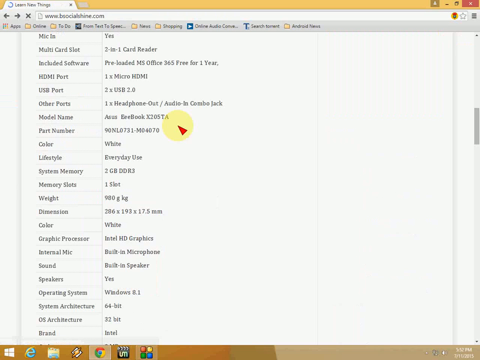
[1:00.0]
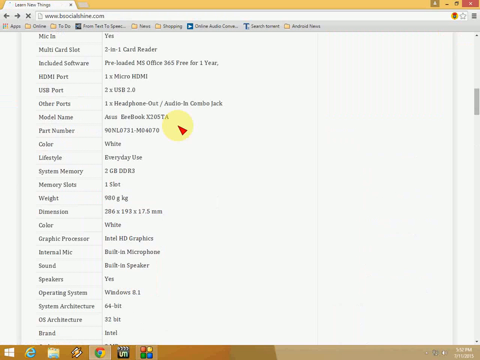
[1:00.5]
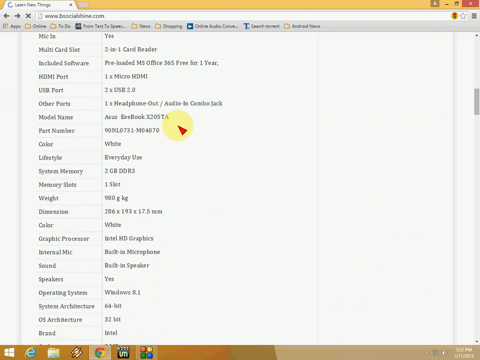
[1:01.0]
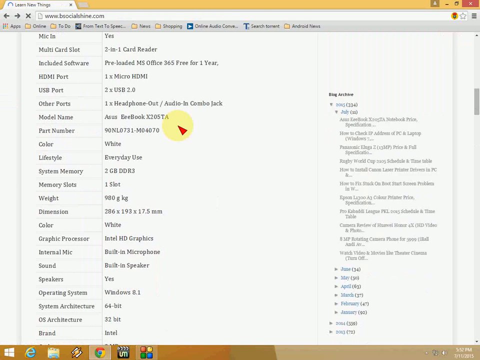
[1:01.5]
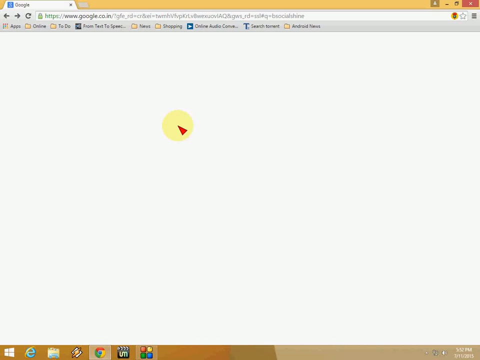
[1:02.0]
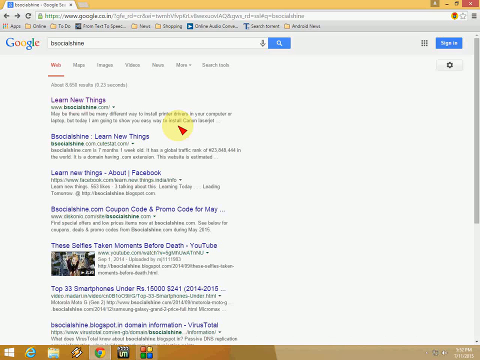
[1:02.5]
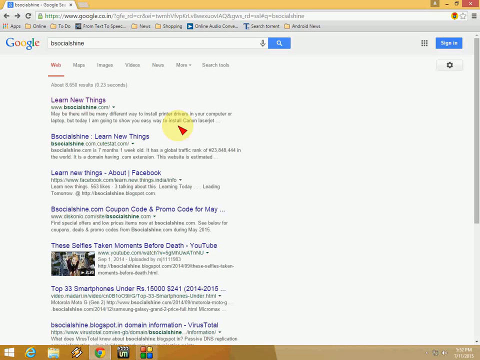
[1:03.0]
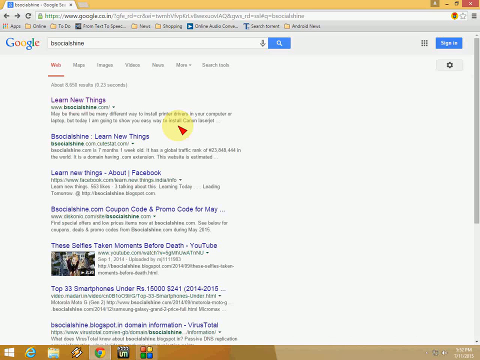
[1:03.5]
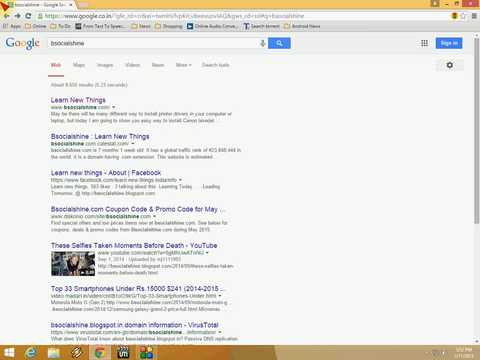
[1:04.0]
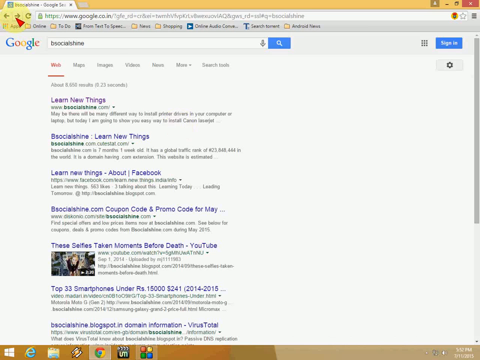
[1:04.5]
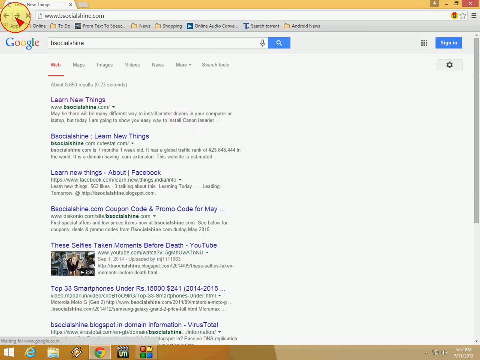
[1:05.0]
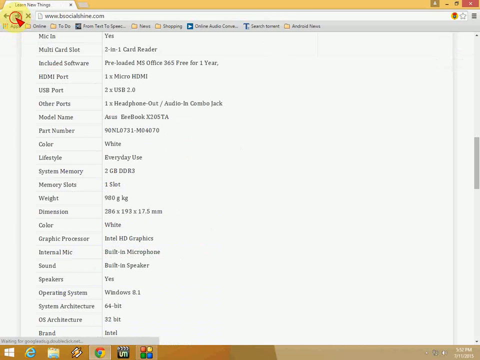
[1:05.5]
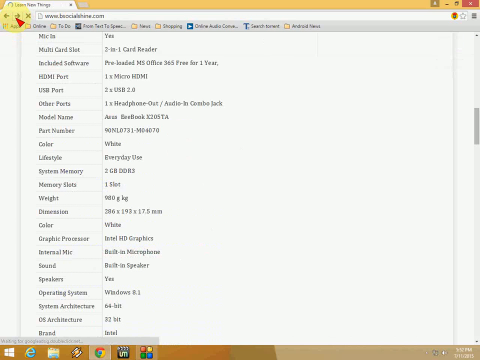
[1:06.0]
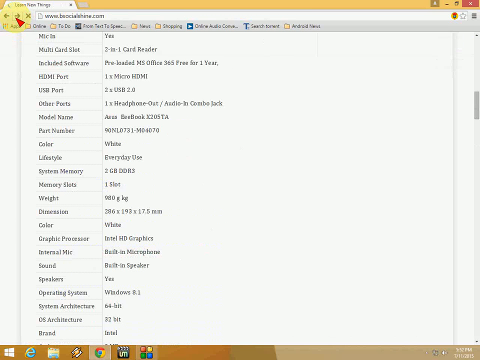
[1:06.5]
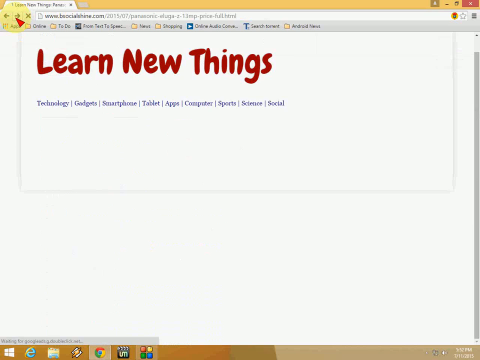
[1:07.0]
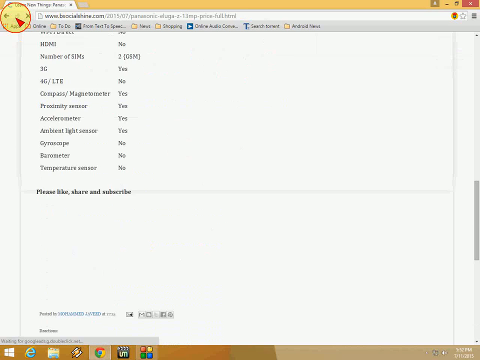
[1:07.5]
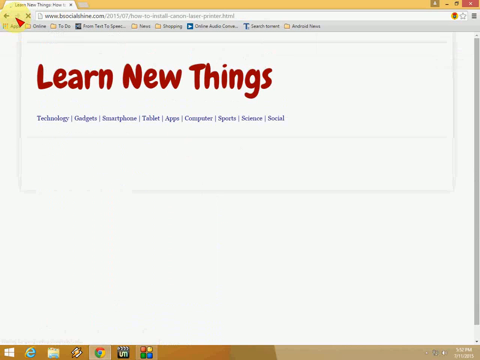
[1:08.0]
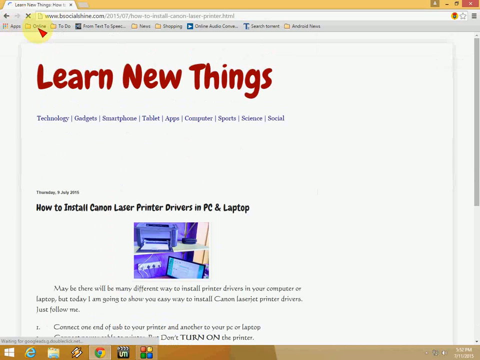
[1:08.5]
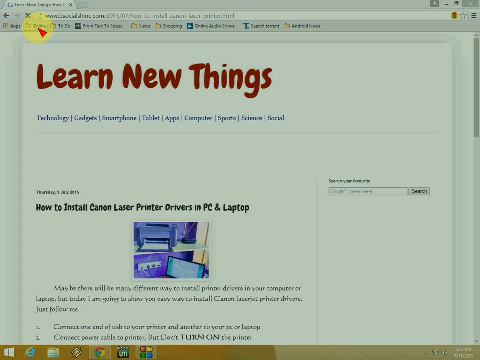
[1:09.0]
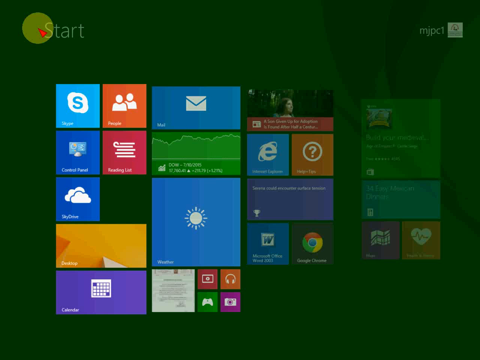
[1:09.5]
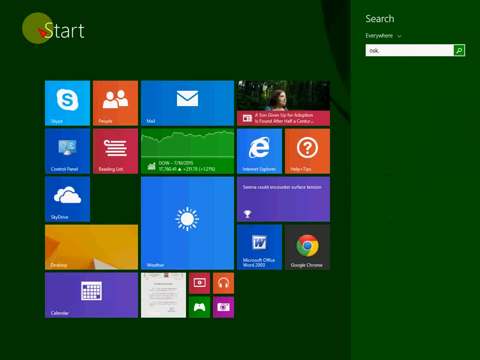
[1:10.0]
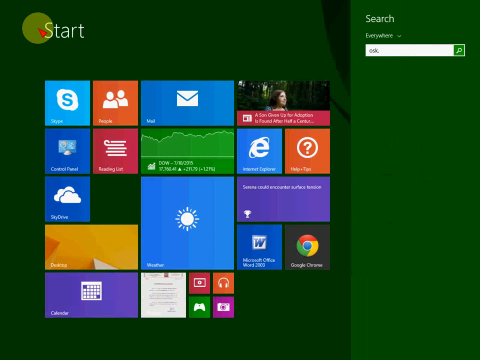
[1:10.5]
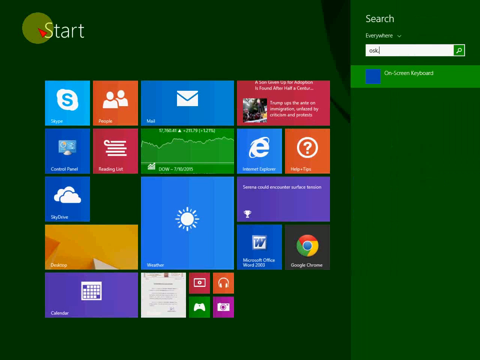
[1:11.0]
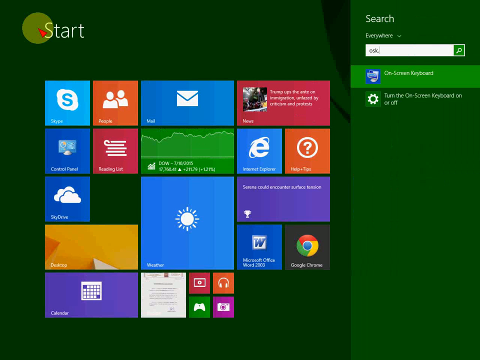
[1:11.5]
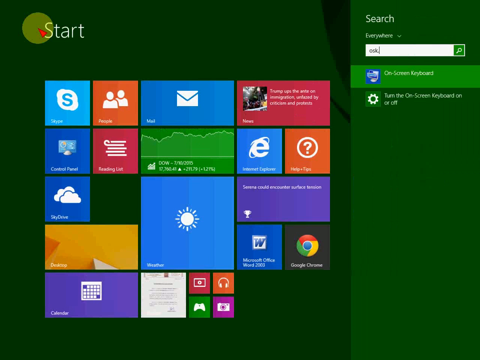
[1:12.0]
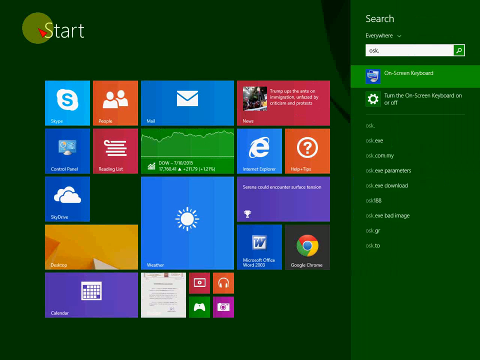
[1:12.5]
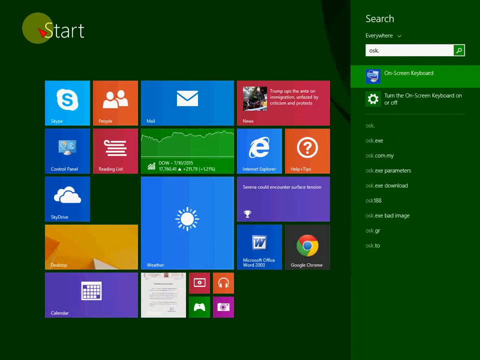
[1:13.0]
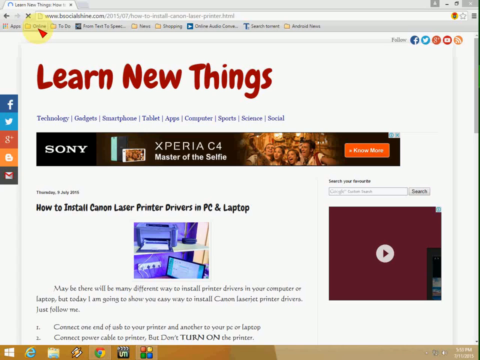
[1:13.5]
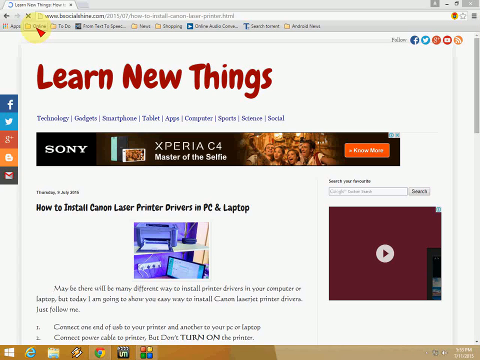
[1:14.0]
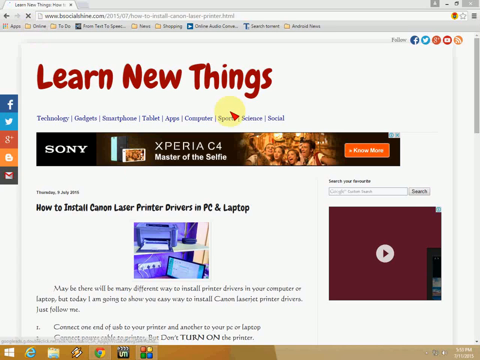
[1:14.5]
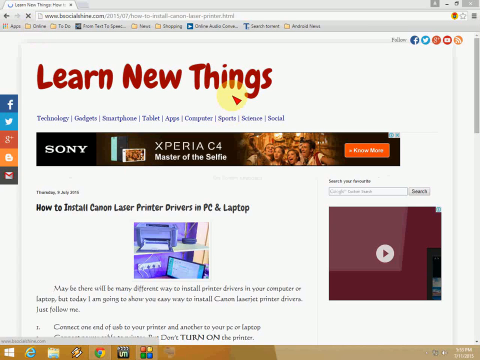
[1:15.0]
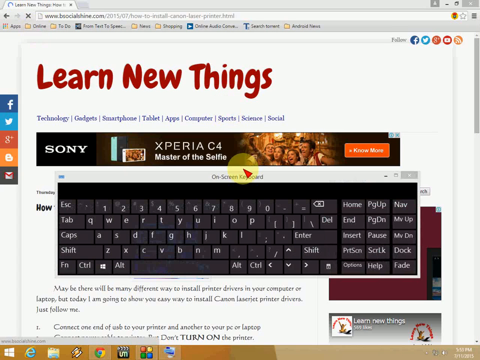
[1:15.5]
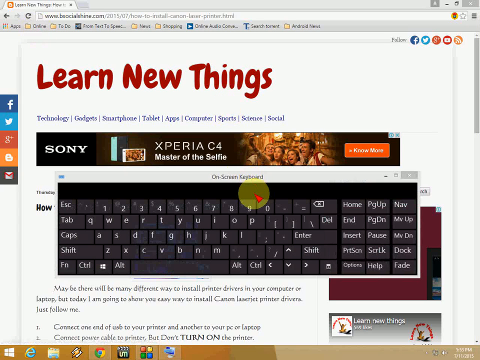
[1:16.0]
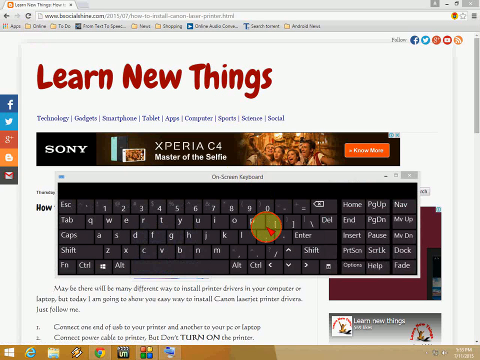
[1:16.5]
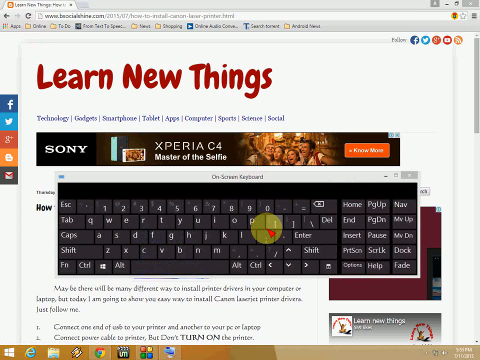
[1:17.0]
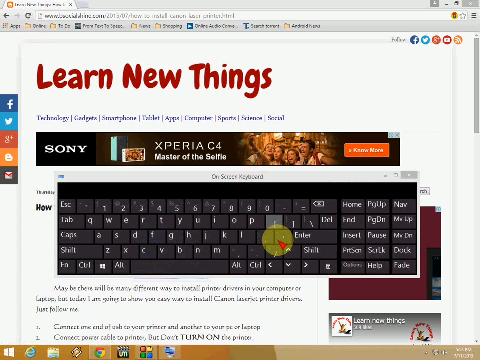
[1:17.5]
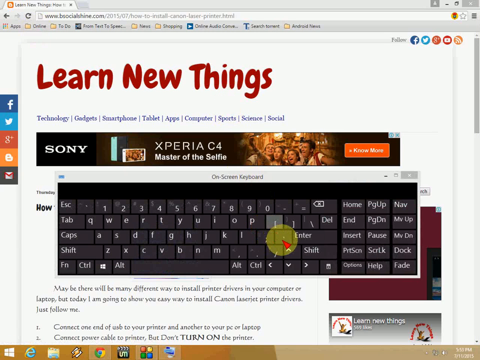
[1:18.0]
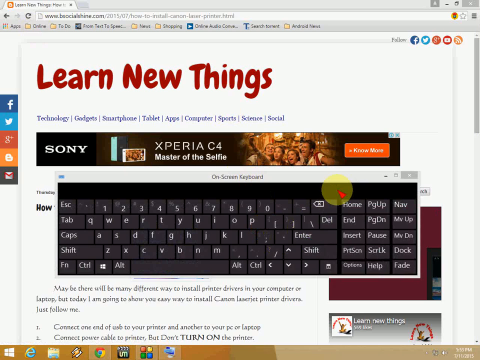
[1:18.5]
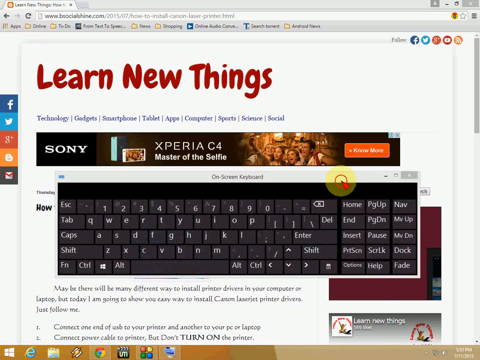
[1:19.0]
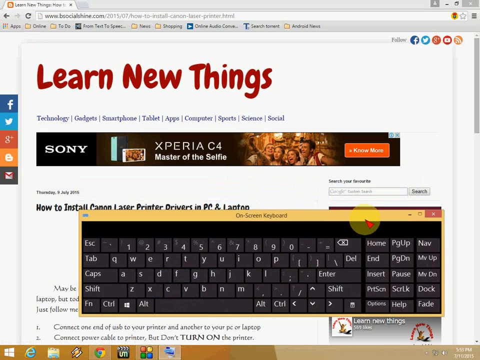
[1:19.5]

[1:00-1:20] The view seemingly returns to the Google page where the search was made. The screen flickers, and the cursor travels to the top left corner of the screen and clicks the forward button to return to the besocialshine.com website. The view seemingly goes back to the Google search page again, and the forward button is clicked once again to return. The start button of the Windows computer is then clicked, bringing up a page with many widgets, including Skype, People, Mail, Internet Explorer, Finance, Reading List, Control Panel, SkyDrive, Desktop, Weather, Microsoft Office, Google Chrome and Calendar. On the right-hand side of the screen is a search bar, into which "OSK" is typed, bringing up two options: "on-screen keyboard" and "turn the on-screen keyboard on and off". An on-screen keyboard then appears and the start menu disappears. The keyboard has a black background and dark grey keys with white letters.